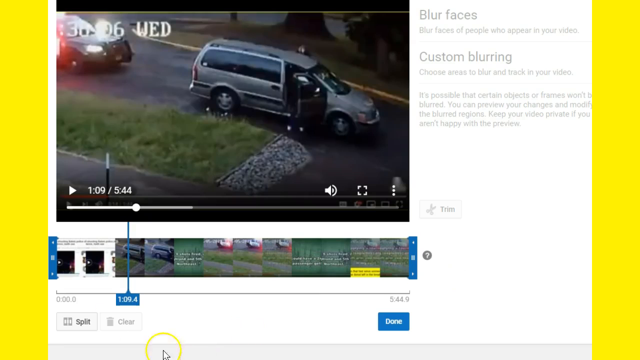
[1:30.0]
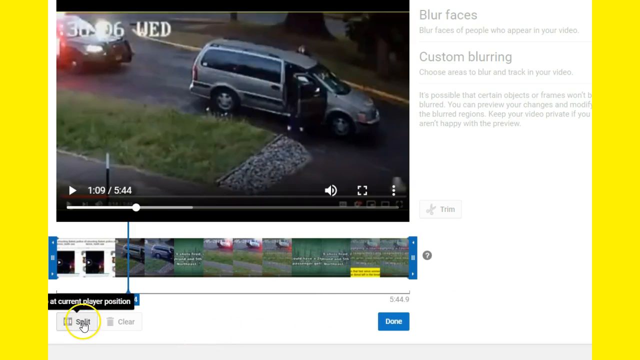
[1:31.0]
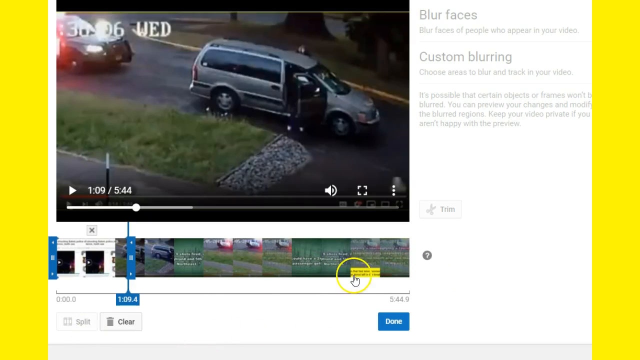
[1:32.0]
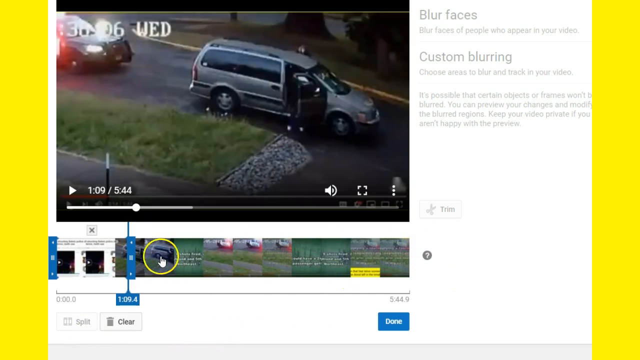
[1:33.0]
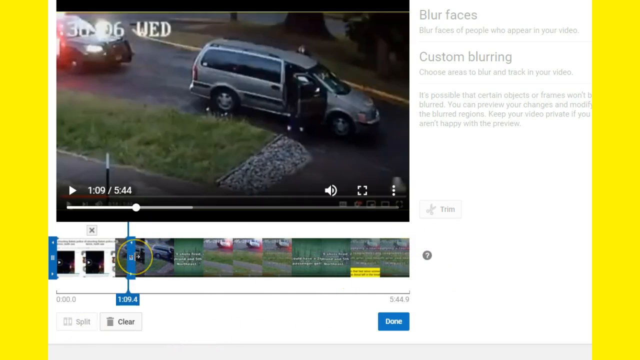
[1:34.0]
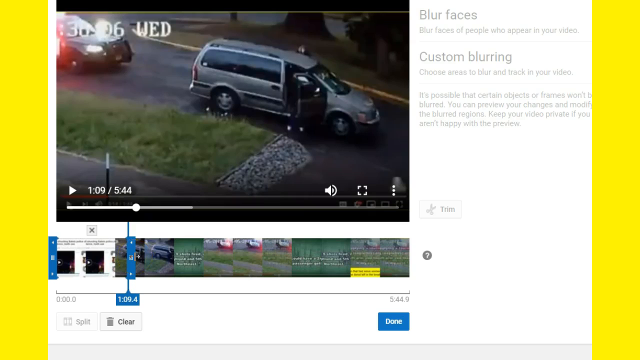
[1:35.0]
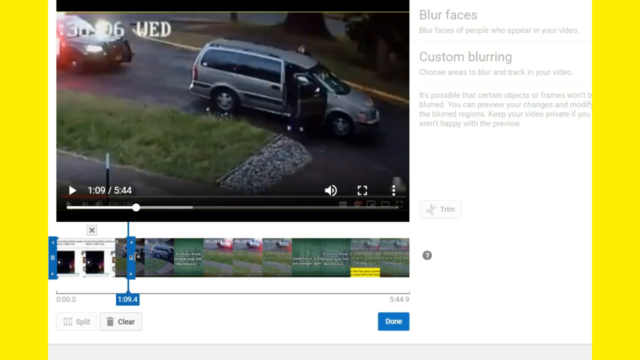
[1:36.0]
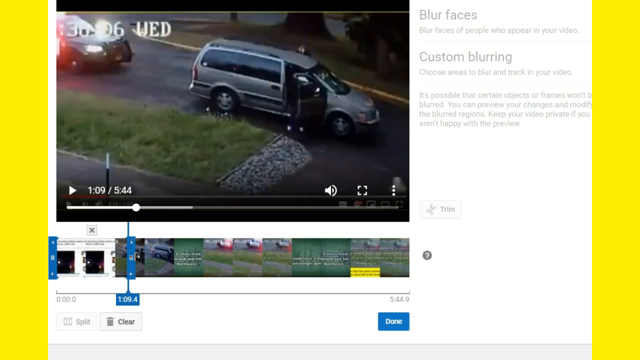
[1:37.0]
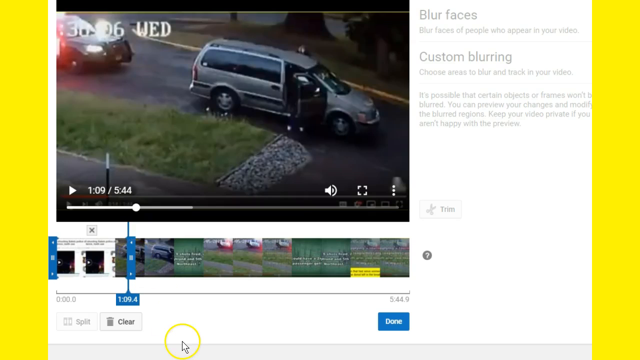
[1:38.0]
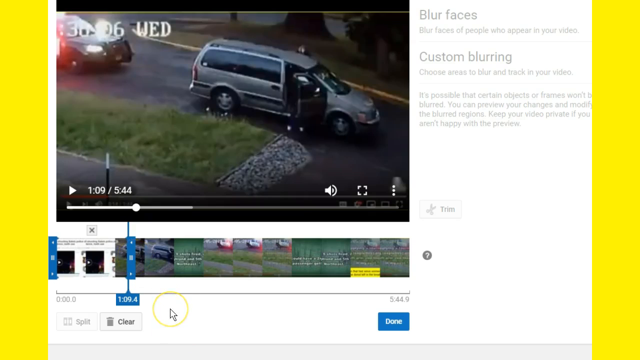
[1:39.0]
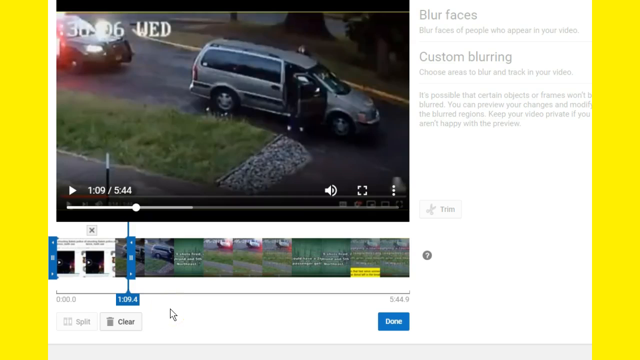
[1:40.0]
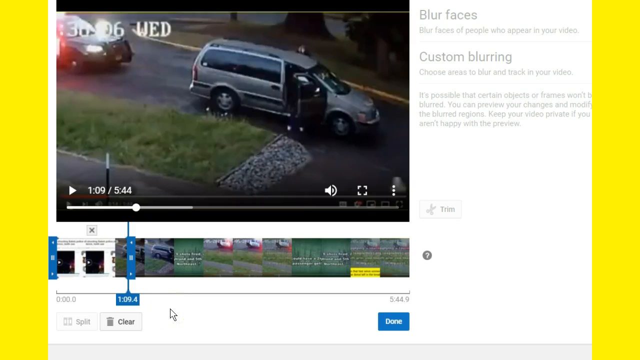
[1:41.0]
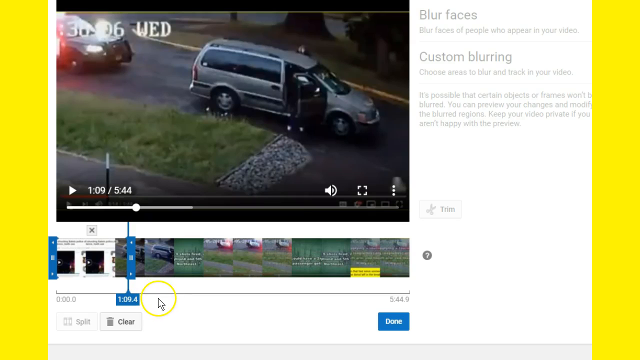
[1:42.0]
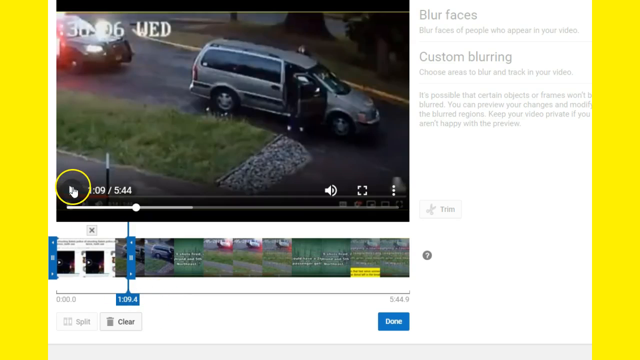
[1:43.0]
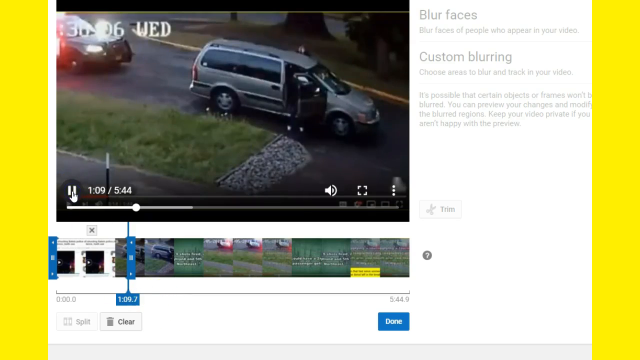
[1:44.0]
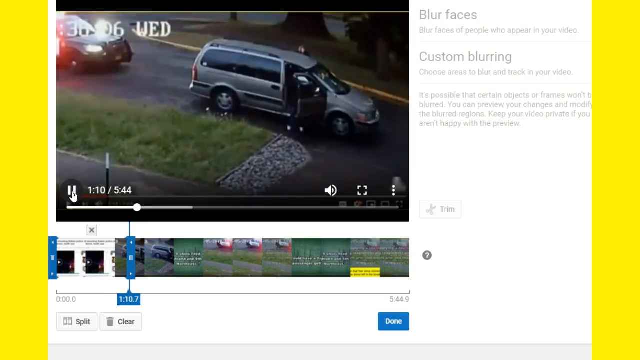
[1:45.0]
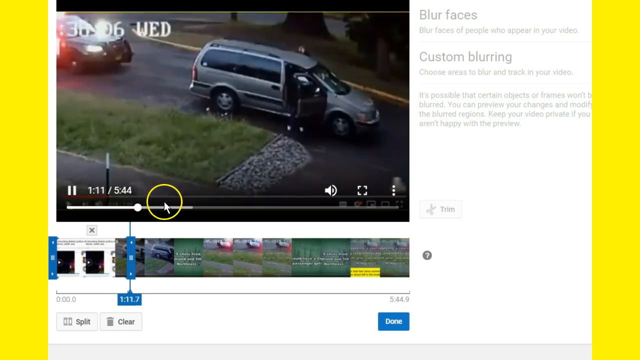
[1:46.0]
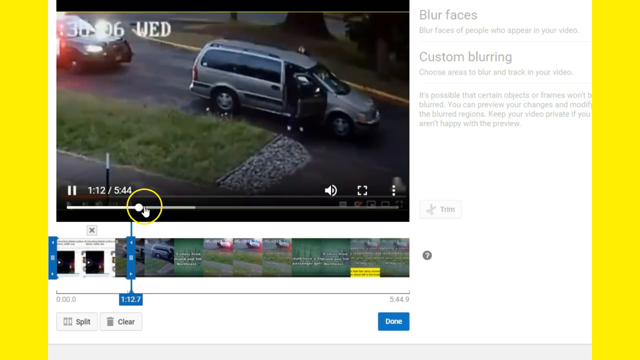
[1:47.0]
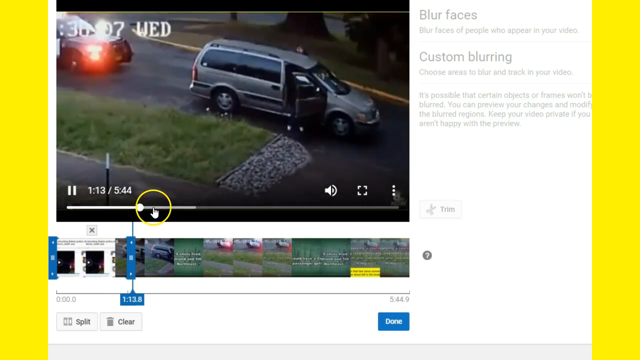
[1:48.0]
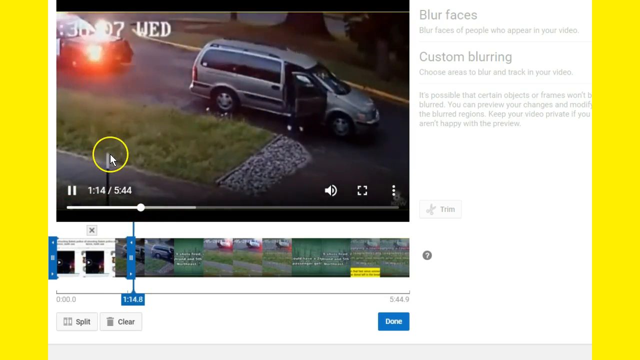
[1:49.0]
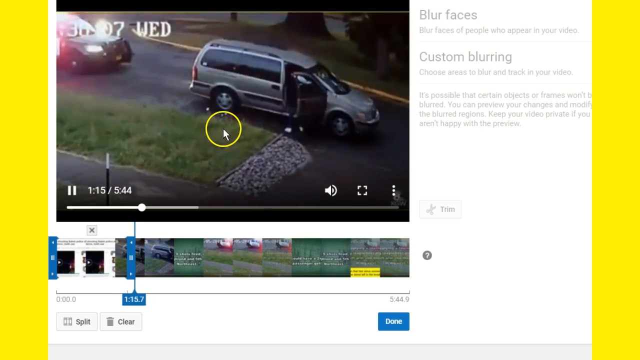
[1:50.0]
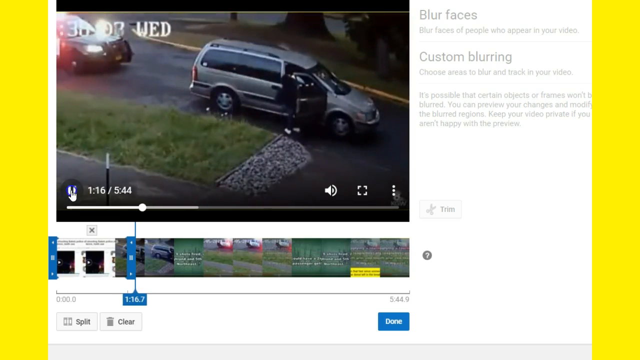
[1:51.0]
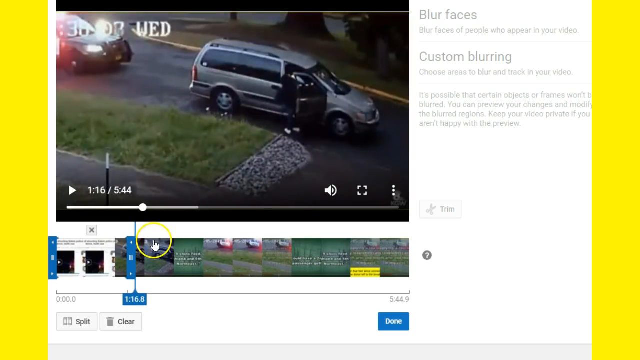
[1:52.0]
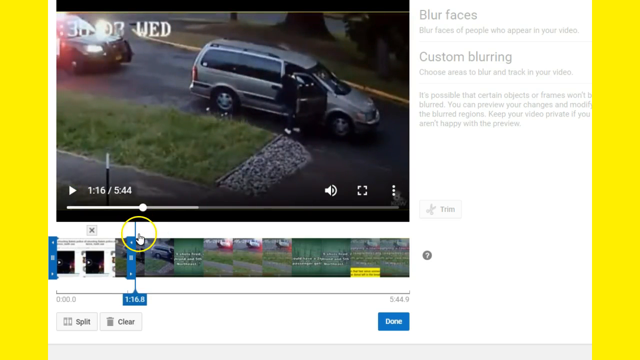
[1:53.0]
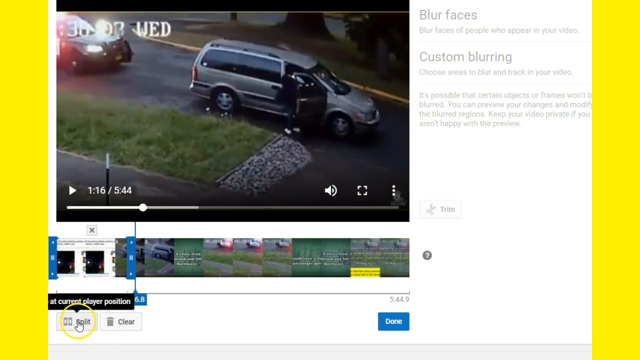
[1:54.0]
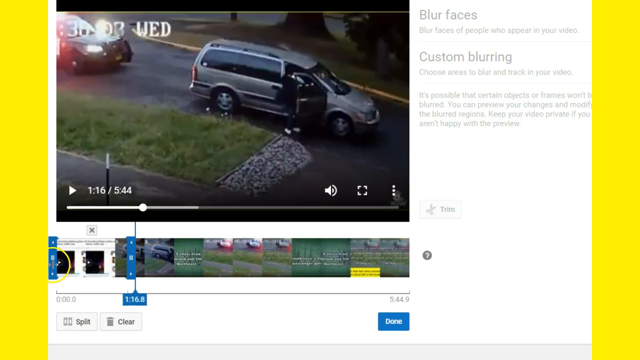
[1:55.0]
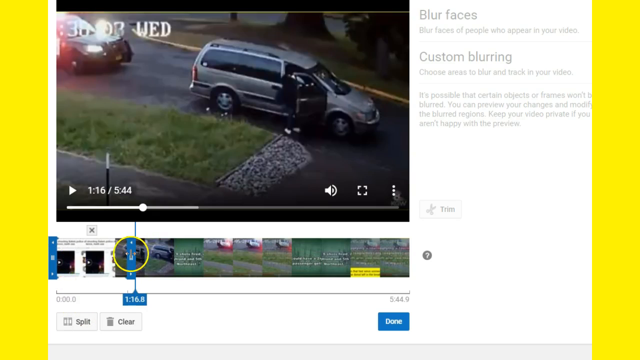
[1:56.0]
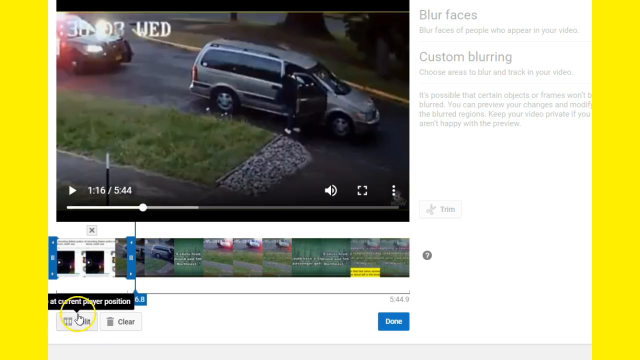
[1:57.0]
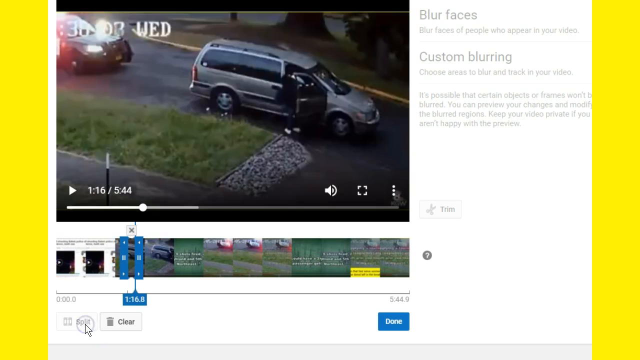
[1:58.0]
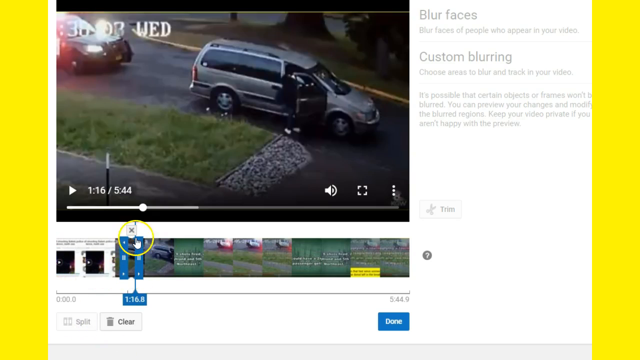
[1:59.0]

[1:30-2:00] The same video remains on screen, with the cars still there, and the mouse tries to fast forward the video. The car in the back seems to be a police car, blinking its lights. There is possibly some movement at the front door of the silver car, but it is unclear whether anyone is there. The silver car stands there without moving, and there seems to be no one in it.